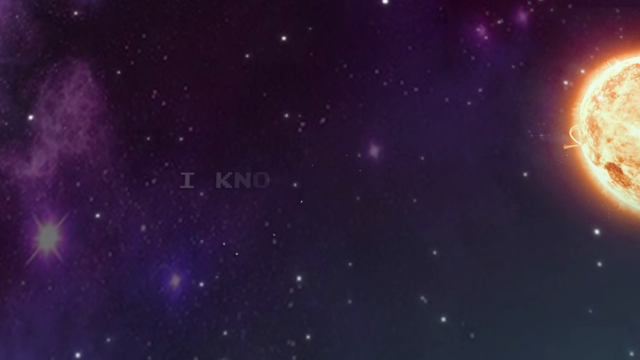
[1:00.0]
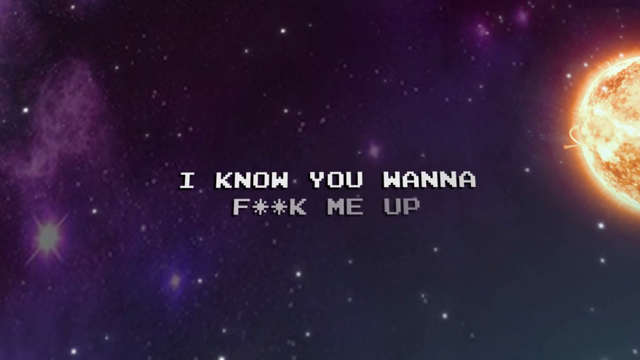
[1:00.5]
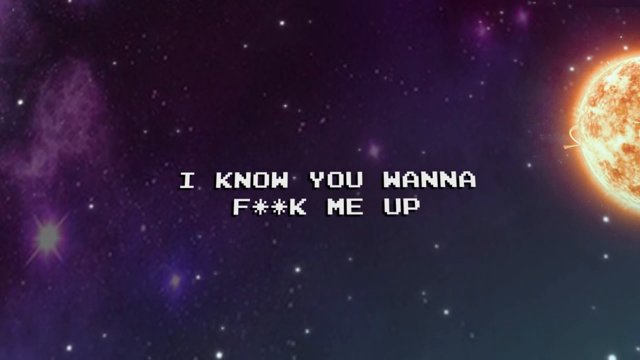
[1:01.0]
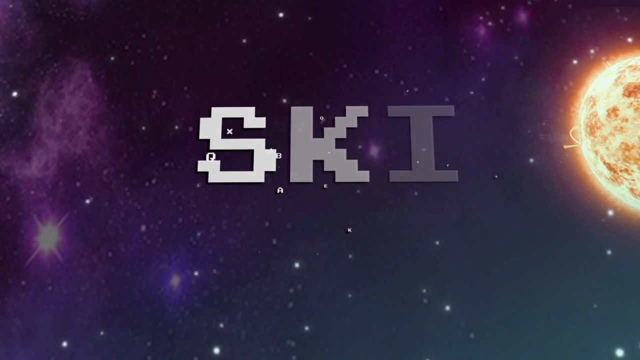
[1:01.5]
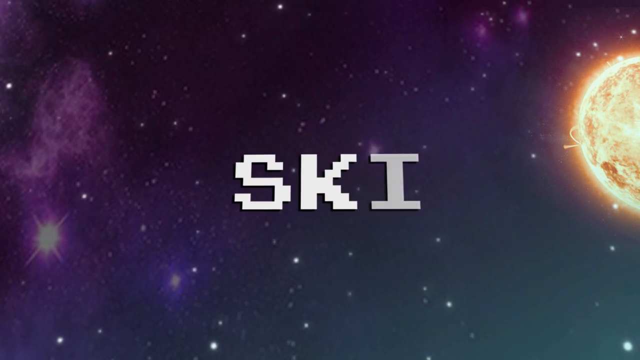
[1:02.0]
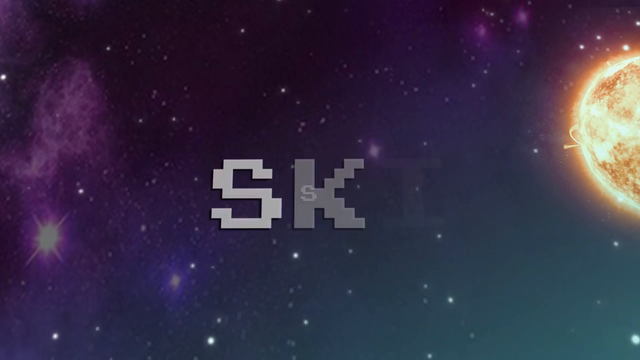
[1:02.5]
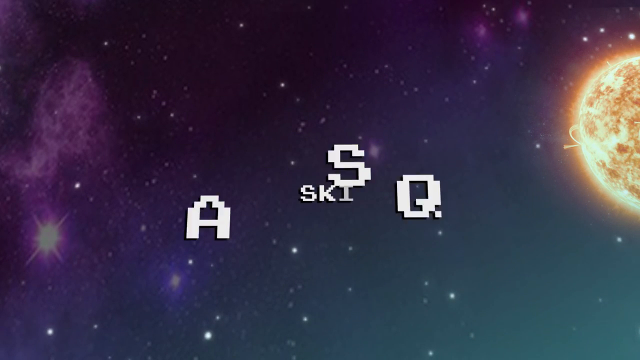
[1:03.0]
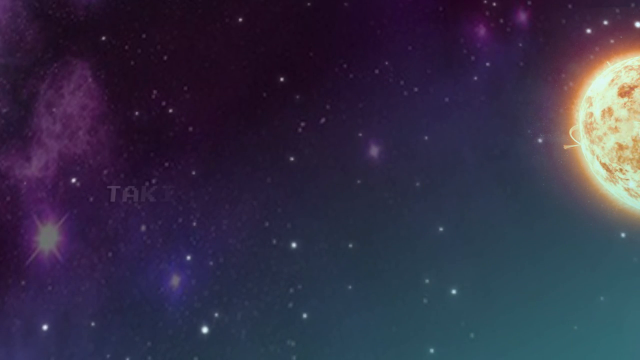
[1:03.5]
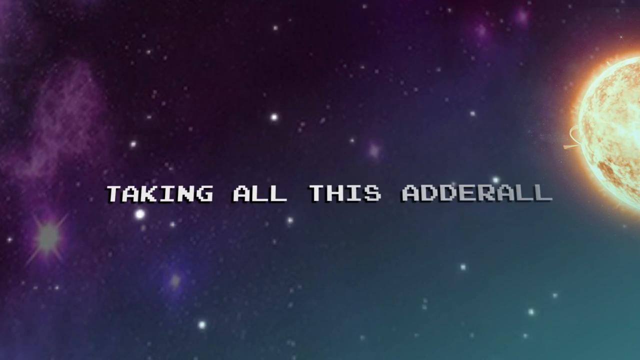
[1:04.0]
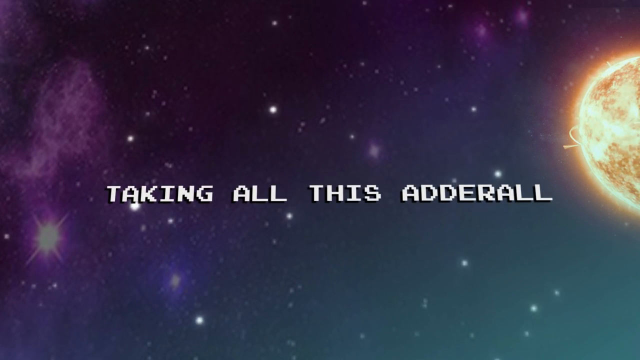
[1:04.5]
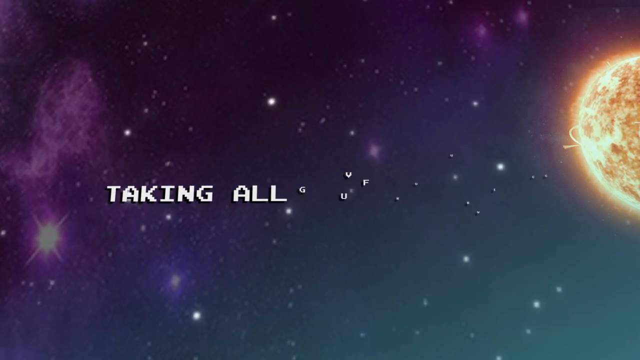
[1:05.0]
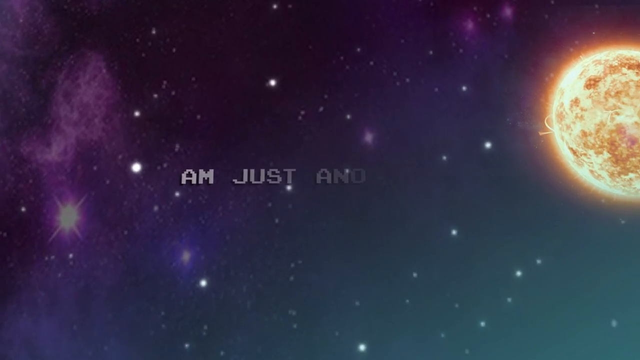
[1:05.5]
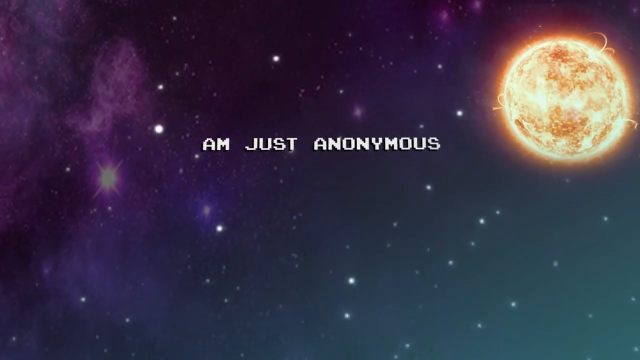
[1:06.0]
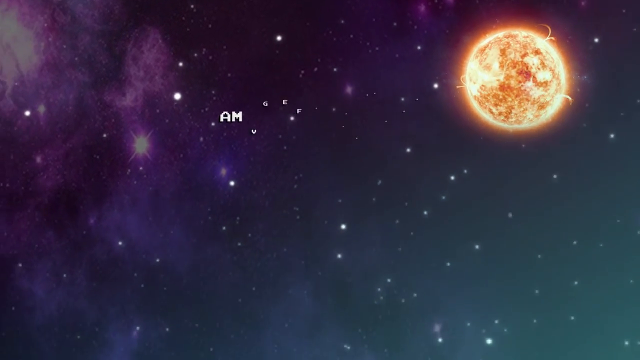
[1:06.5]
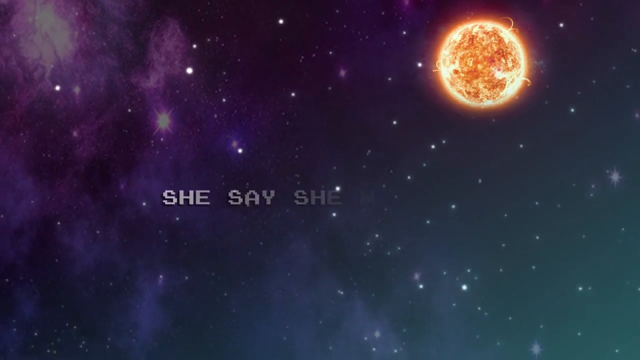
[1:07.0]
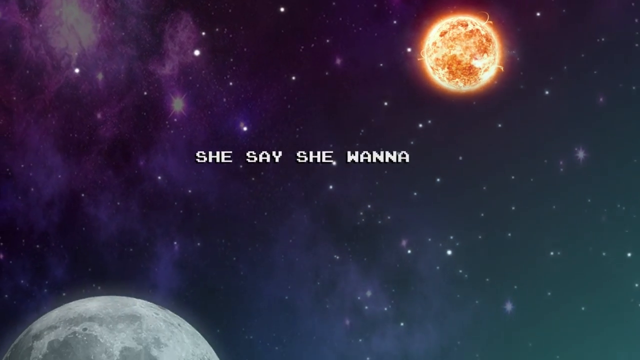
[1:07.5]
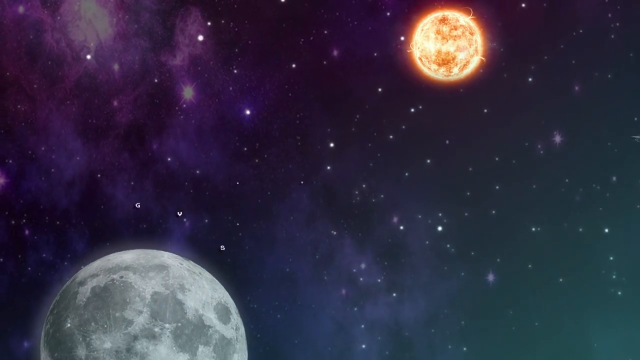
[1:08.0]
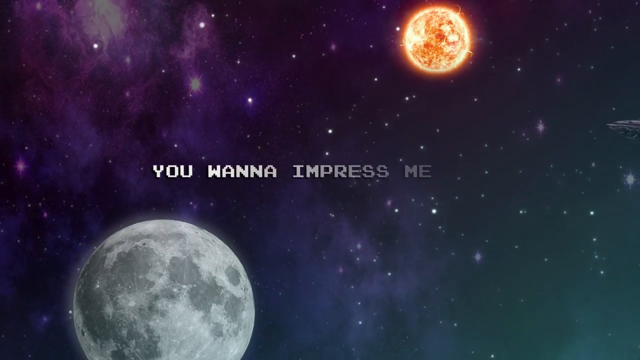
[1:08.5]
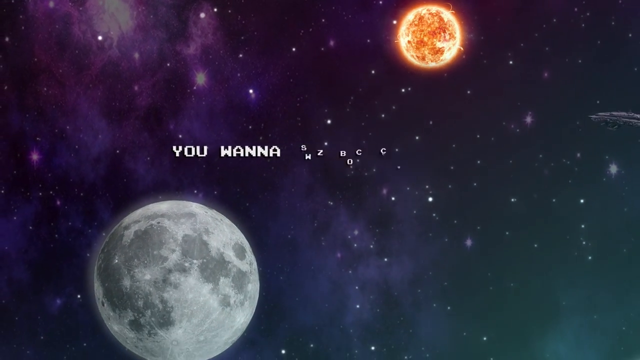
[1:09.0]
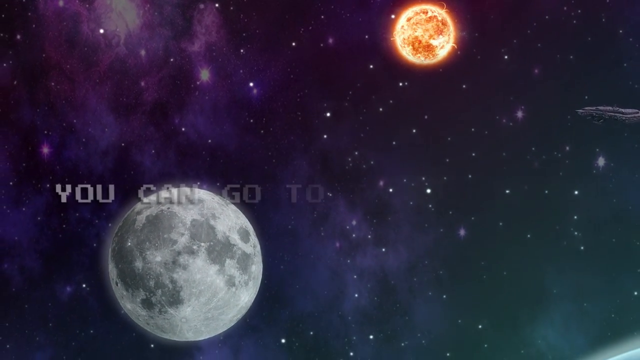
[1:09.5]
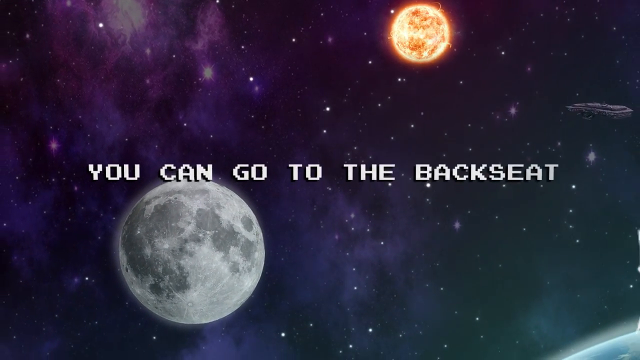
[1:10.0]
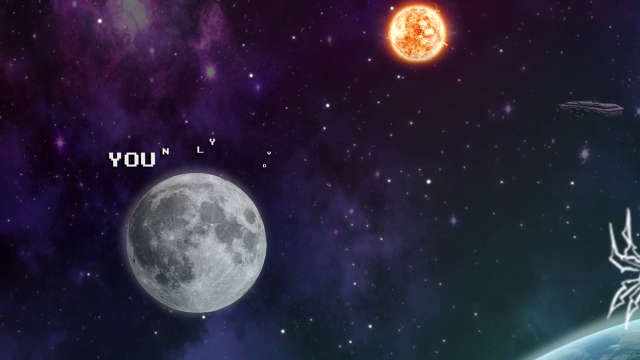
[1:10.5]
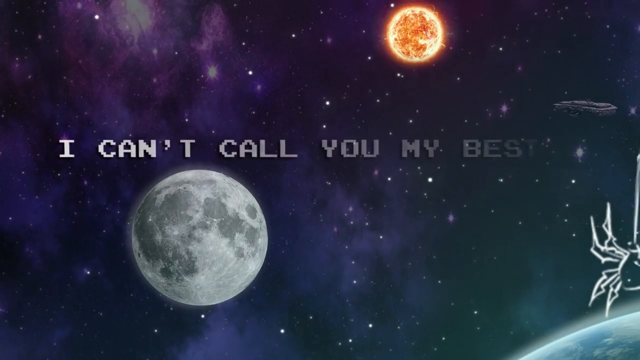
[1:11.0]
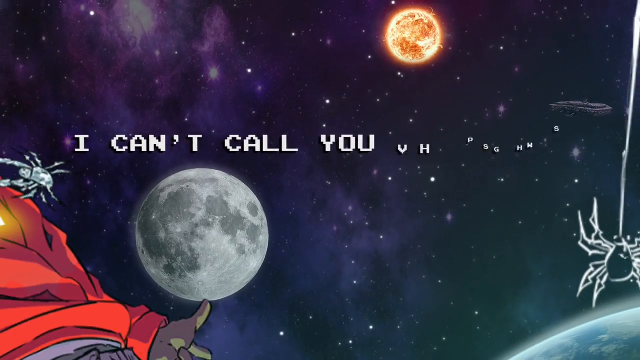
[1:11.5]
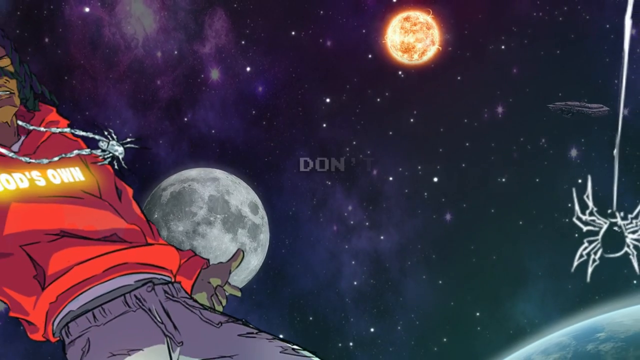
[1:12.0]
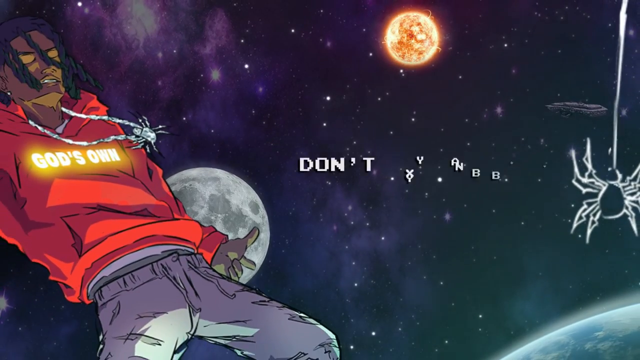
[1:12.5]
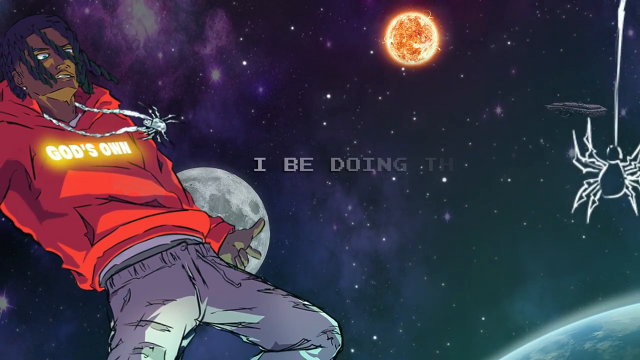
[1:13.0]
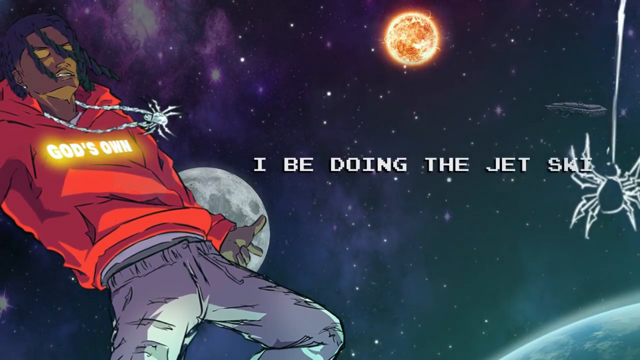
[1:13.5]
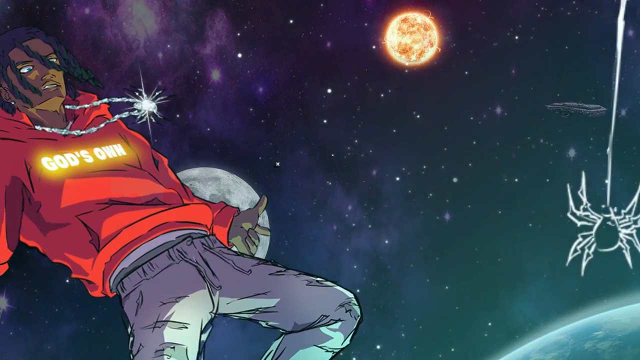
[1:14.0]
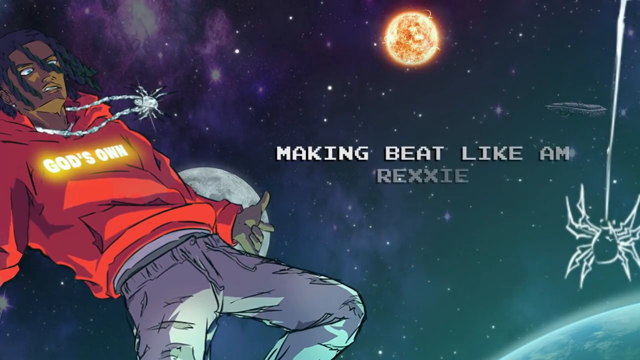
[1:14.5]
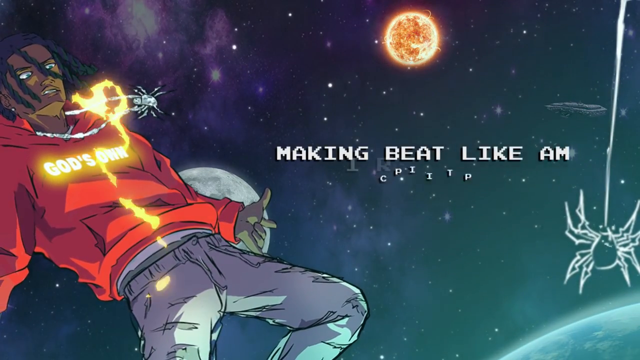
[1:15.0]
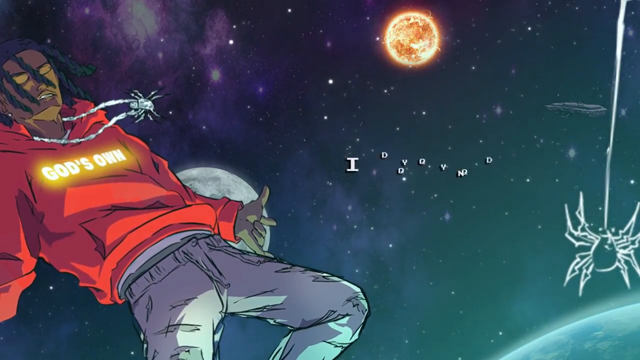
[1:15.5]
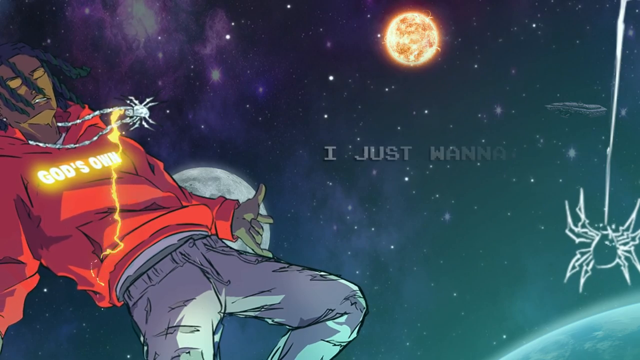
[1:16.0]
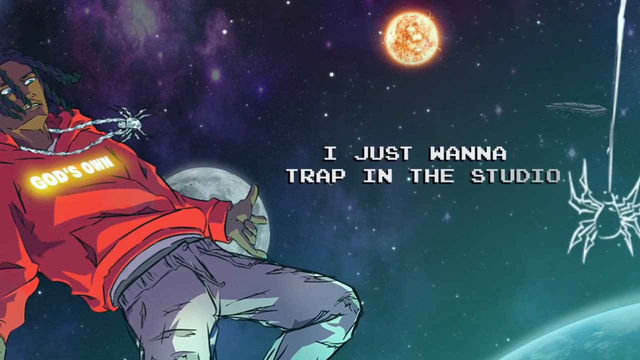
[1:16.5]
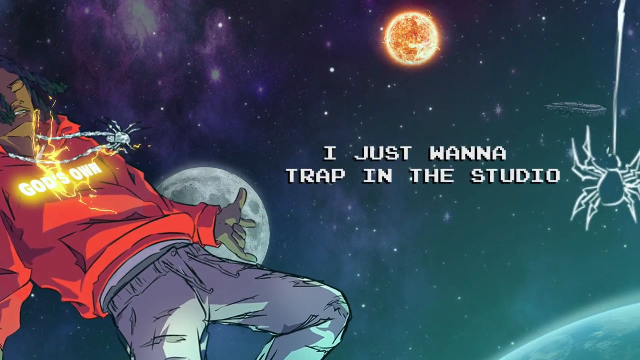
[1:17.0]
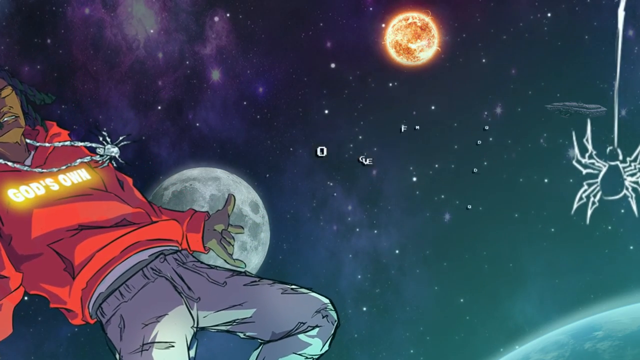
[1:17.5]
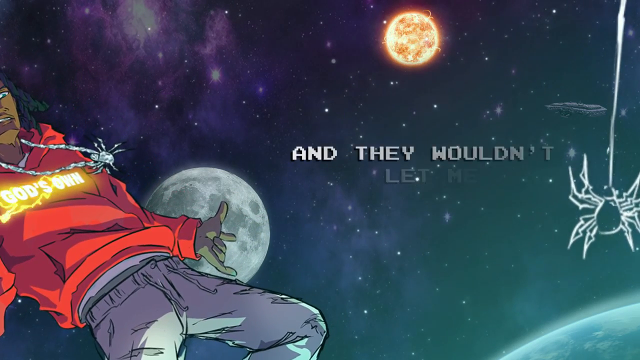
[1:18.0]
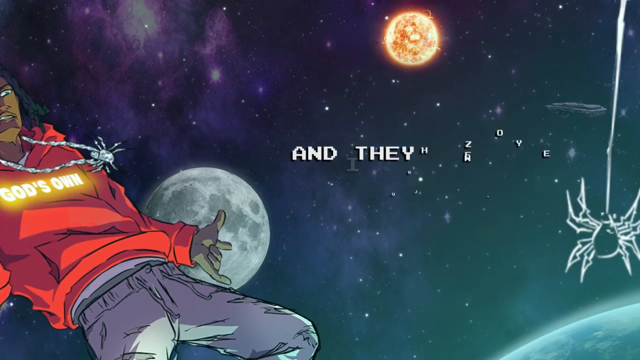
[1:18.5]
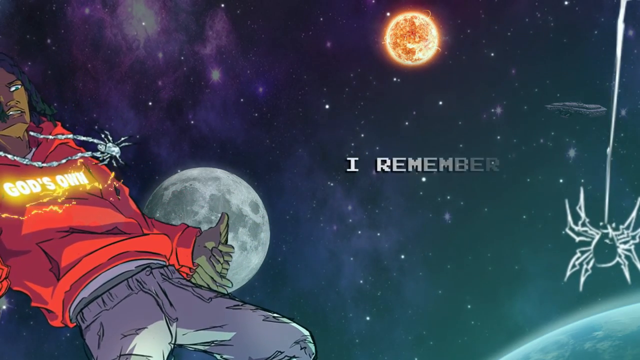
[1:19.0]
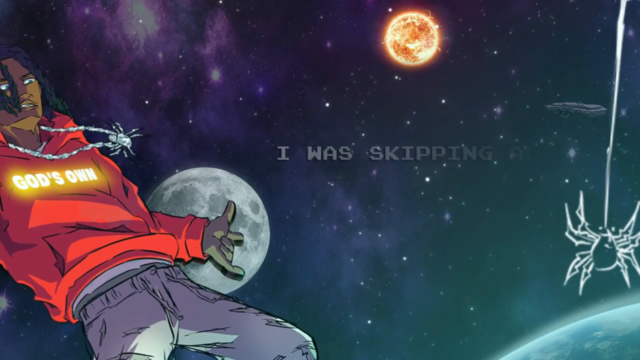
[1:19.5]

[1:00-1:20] The character is not visible at first. The scene starts with the night sky, the sun graphic sort of cropped off the right-hand side so only half of it glows, stars in the background in a purplish Milky Way, and lyric text taking up most of the foreground. The view zooms out a bit, showing more of the sun, and the moon comes in along with more lyrics. The spiderweb comes in at the same time as the character floating in space. The character also wears a spider necklace. He appears to be half-asleep as he floats through the night sky in kind of a reclining, floating position. He appears to be a Black male with long, dreadlock-style hair, wearing a red hoodie and gray or blue jeans, floating in space while the lyrics come in around him.